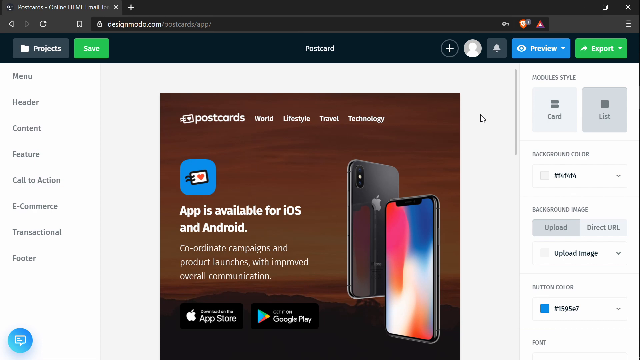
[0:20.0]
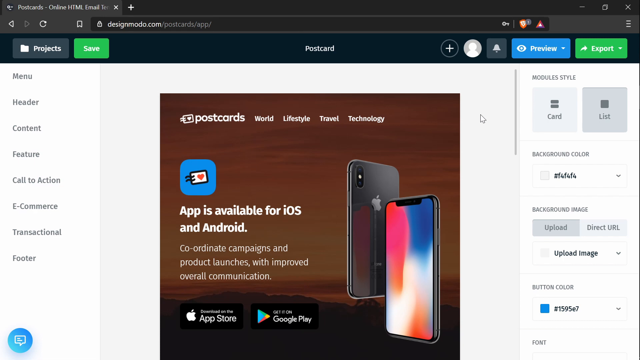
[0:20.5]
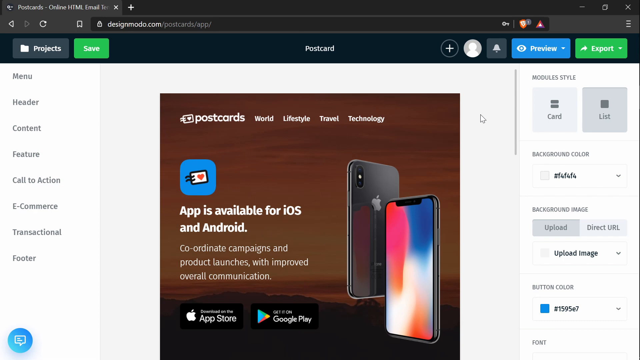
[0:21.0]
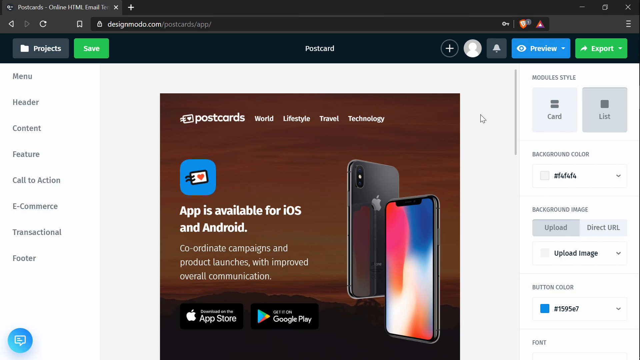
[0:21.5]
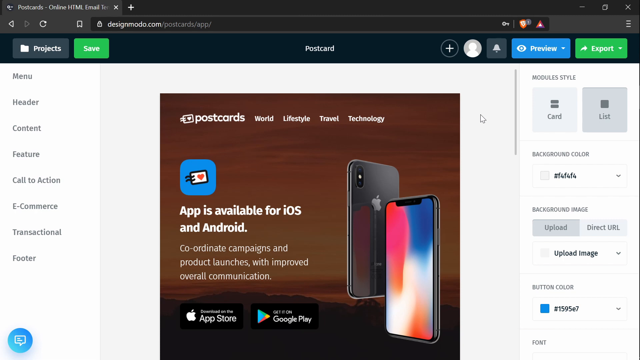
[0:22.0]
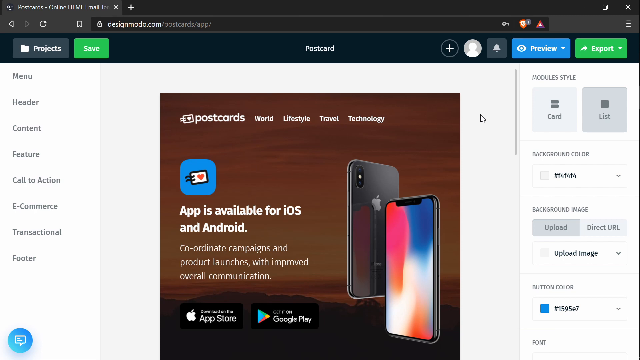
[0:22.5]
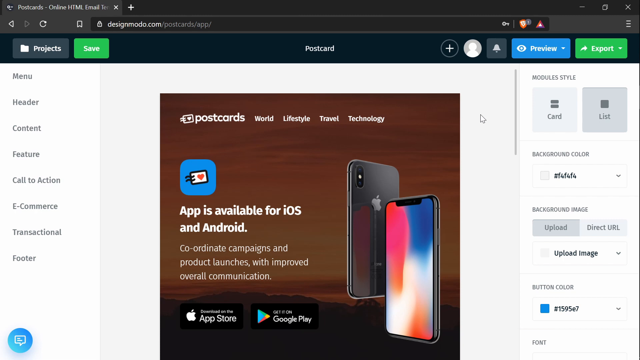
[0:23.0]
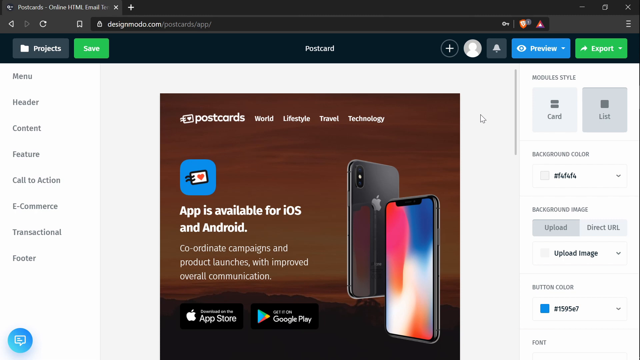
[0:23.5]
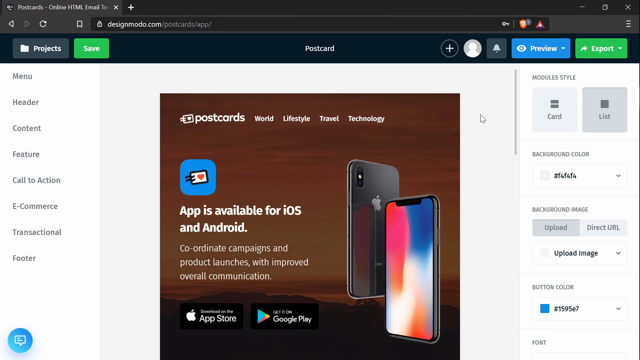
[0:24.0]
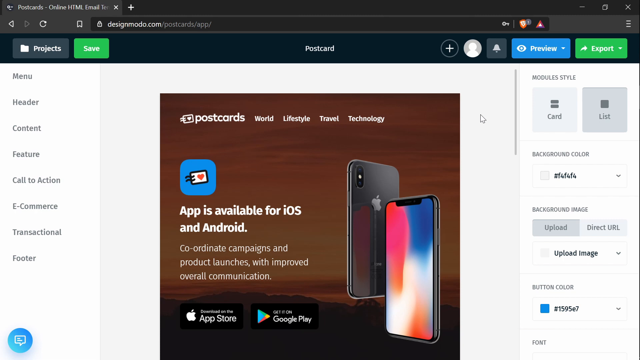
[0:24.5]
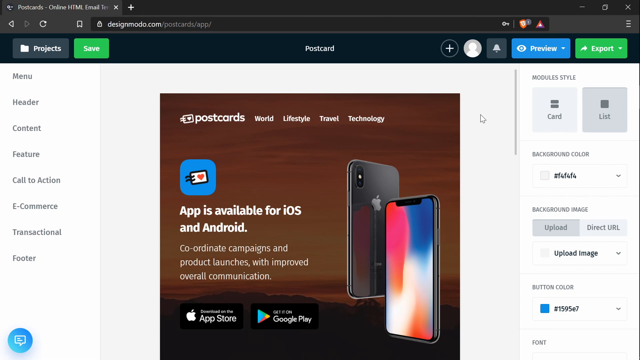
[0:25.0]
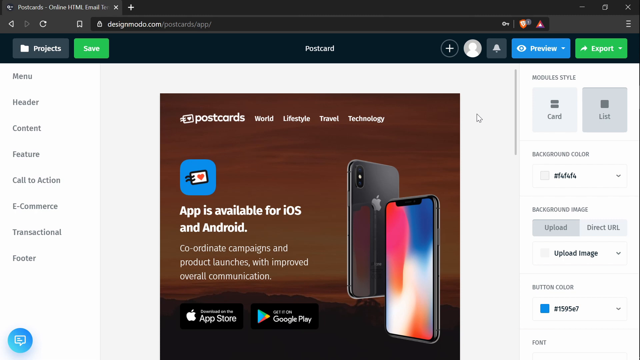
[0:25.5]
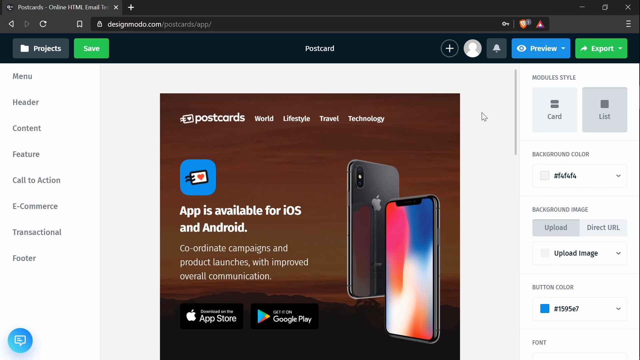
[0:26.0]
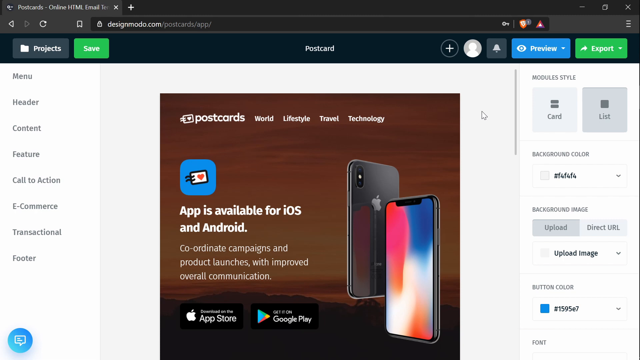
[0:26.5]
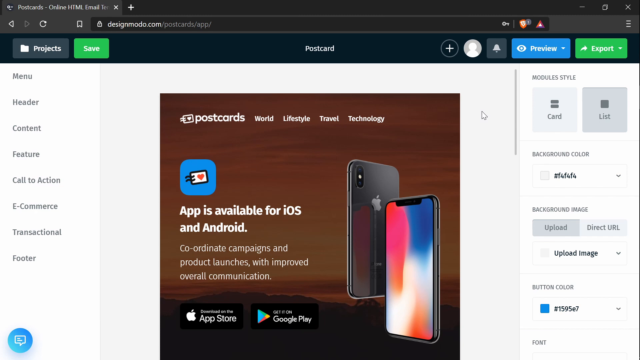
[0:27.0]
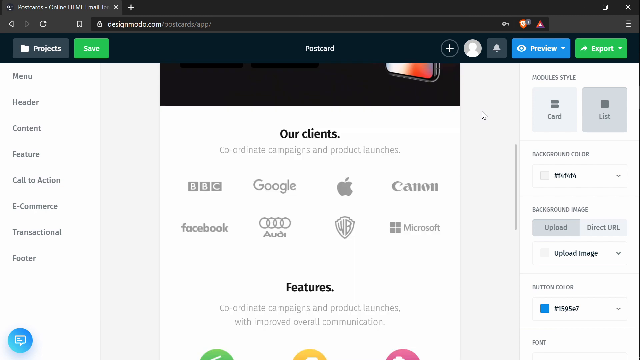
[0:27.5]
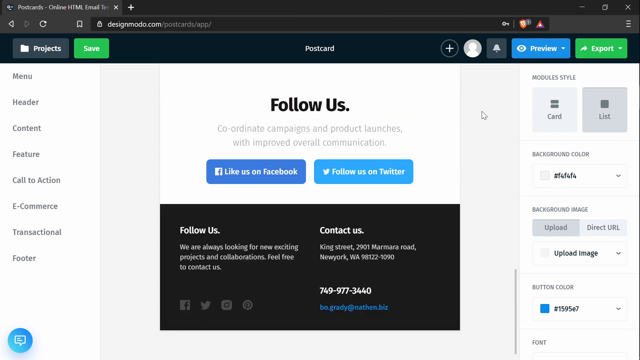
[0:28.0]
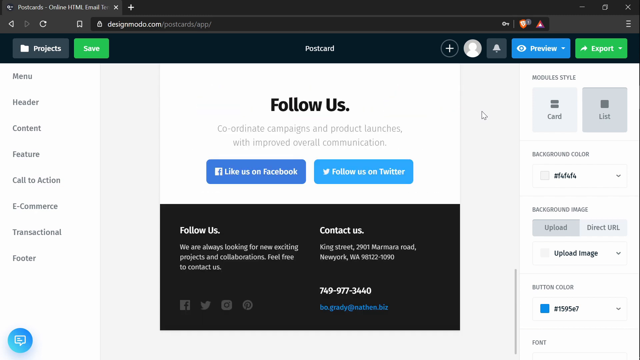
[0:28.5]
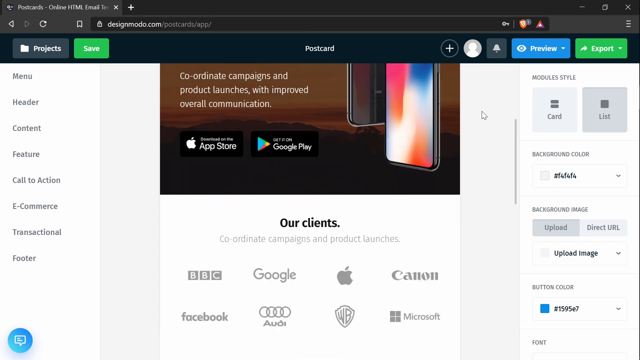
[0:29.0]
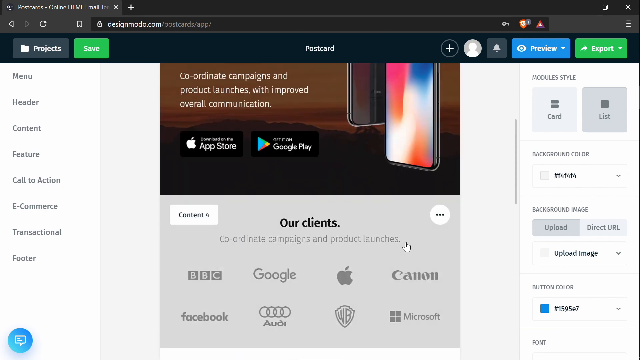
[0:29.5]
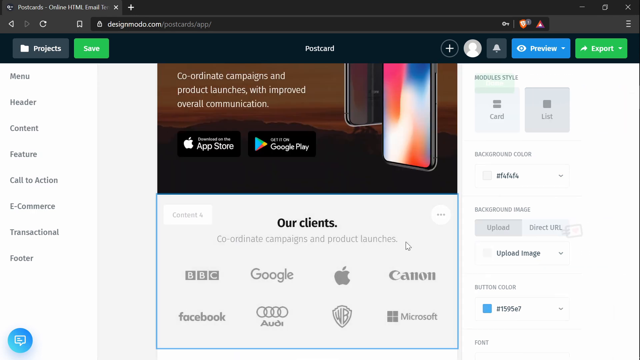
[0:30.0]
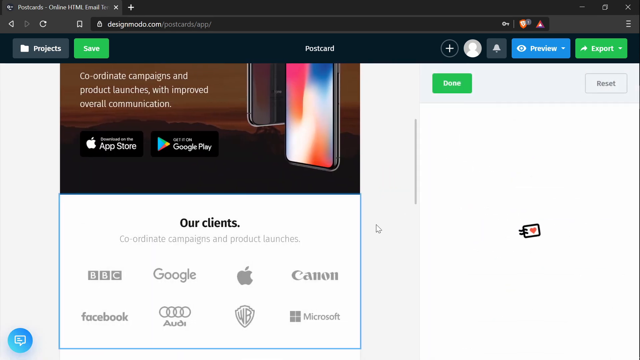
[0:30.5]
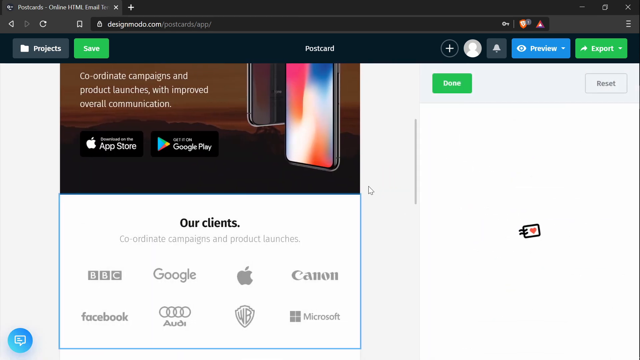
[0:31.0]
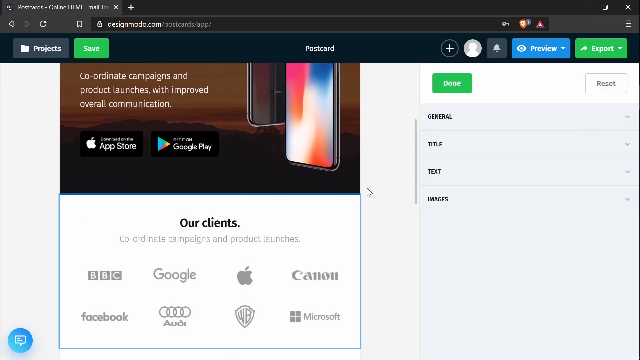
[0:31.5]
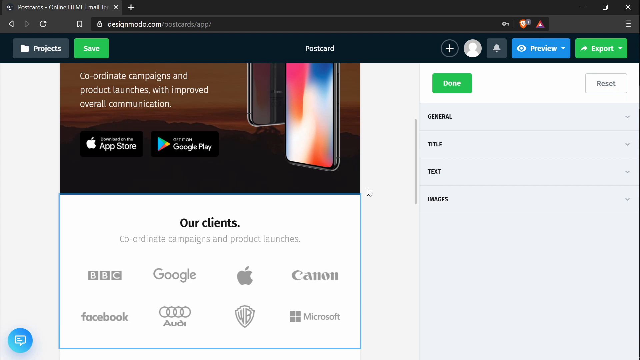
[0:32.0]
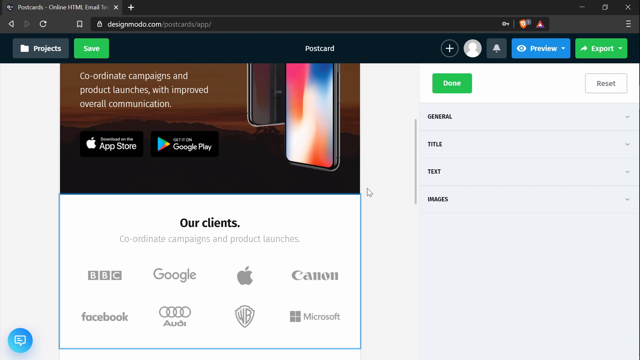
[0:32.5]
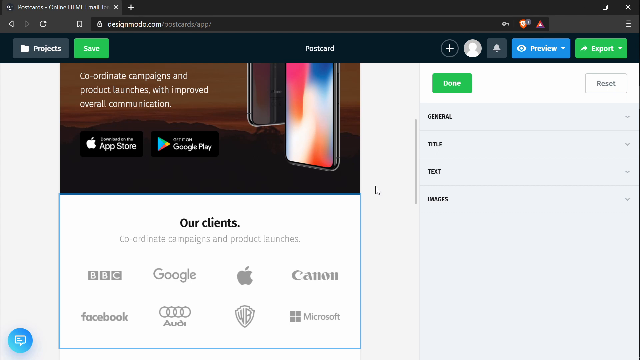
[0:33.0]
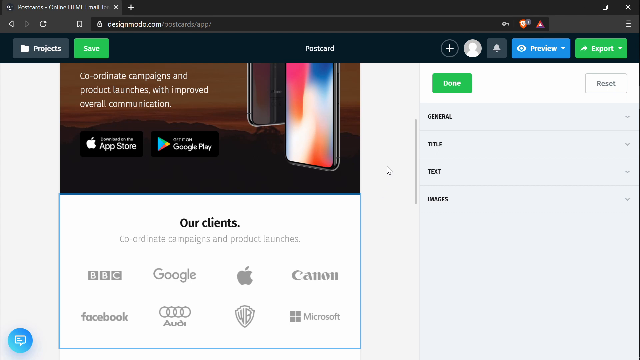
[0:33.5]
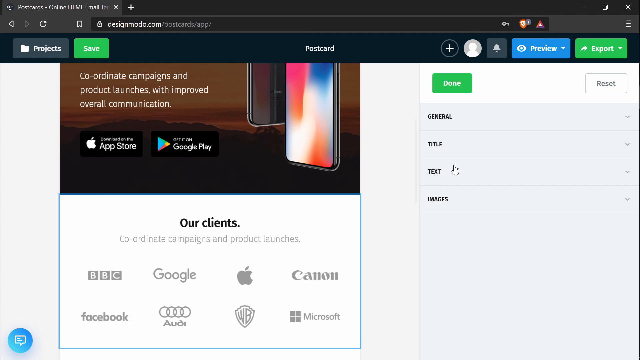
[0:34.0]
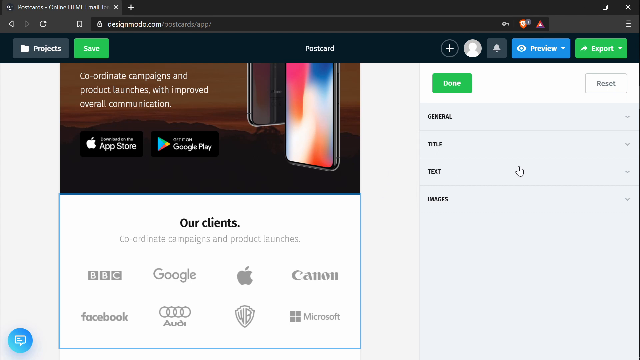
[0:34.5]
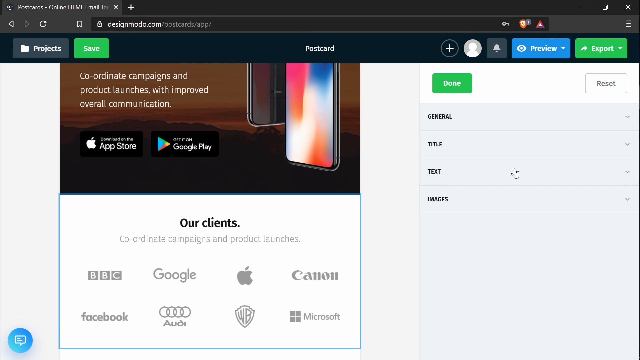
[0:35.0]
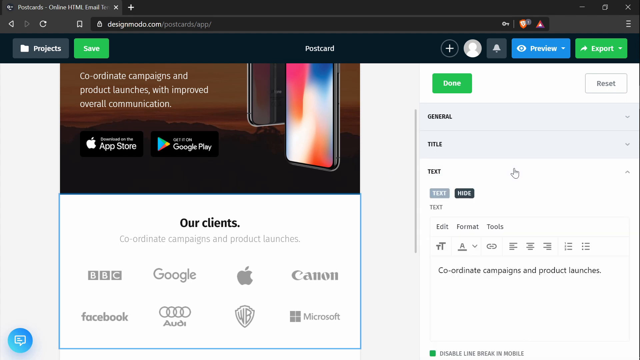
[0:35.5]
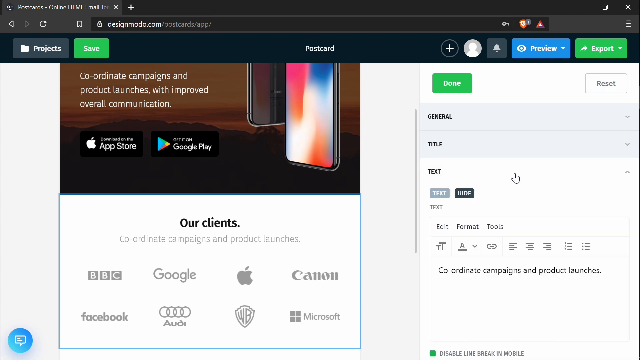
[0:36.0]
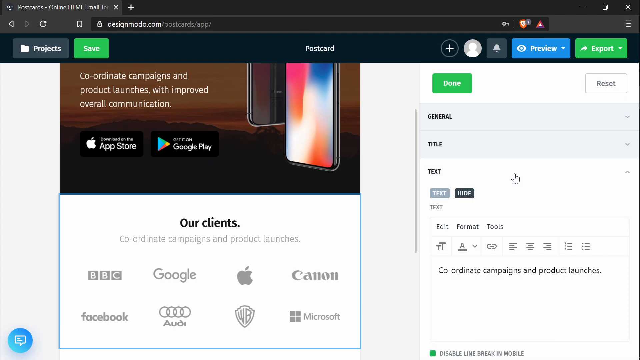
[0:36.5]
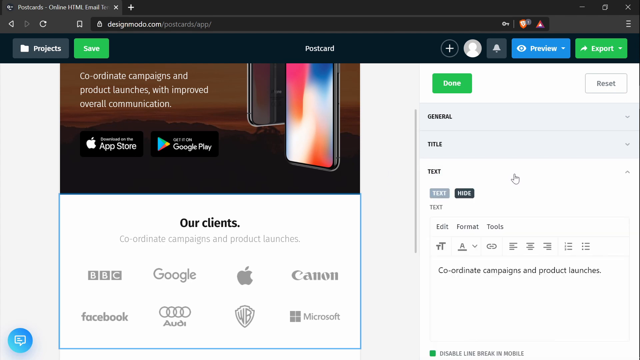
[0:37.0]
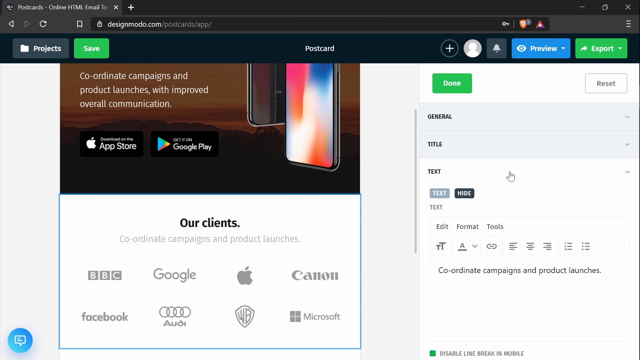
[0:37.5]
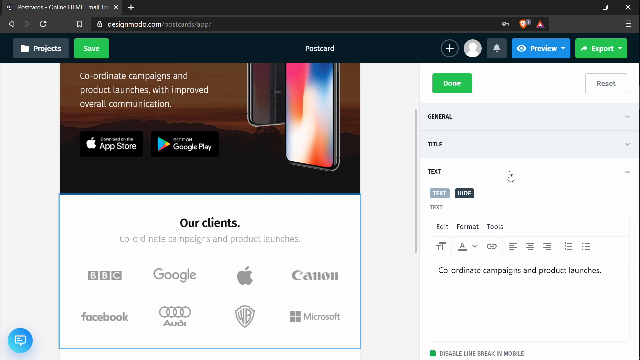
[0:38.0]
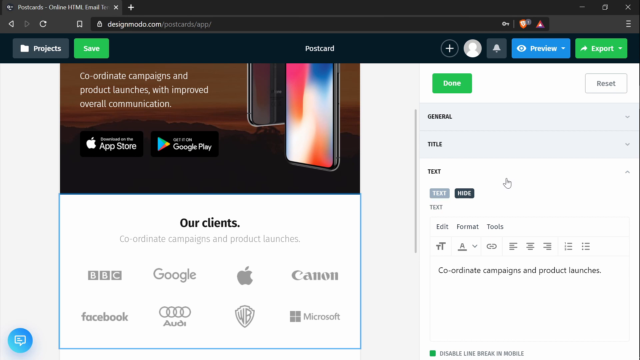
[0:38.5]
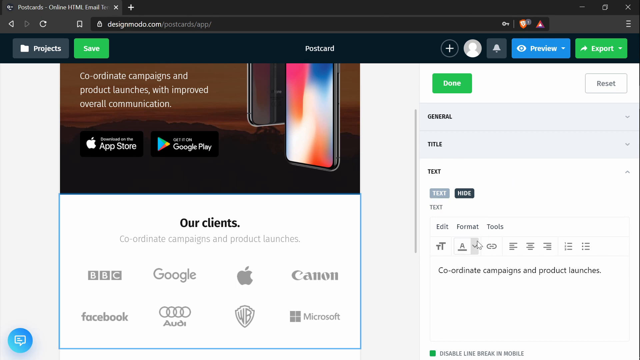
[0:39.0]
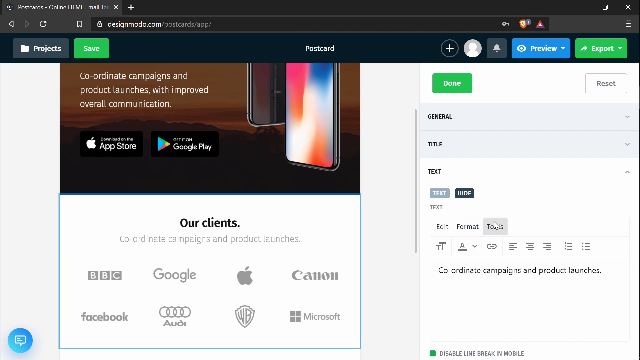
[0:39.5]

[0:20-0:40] The ad takes up the majority of the screen, directly in the centre. It has the Postcards label in the top left, and the Postcards logo looks like a little postcard with two squiggly lines going into the card and a red heart on the right-hand side of the card. To the right of the logo it says "World Lifestyle, Travel and Technology," and underneath the line stating the app is available for iOS and Android it says "coordinate campaigns and product launches with improved overall communication." On the right-hand side, the background colour is set to a white with the code F4F4F4, the background image is set to Upload with options to upload another image or paste a direct URL, and the button colour is a bright blue with the code 1595E7. The person scrolls down to the Features section, under which it says "Coordinate Campaigns and Product Launches with Improved Overall Communication." They then click on "our clients", just below the ad, where the clients listed include BBC, Google, Apple, Canon, Facebook, Audi, Warner Brothers and Microsoft Office. On the right-hand side four options appear: General, Title, Text and Images. The person clicks on Text, which brings up the text options.